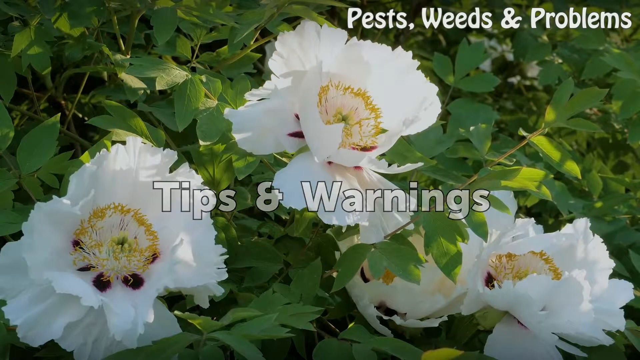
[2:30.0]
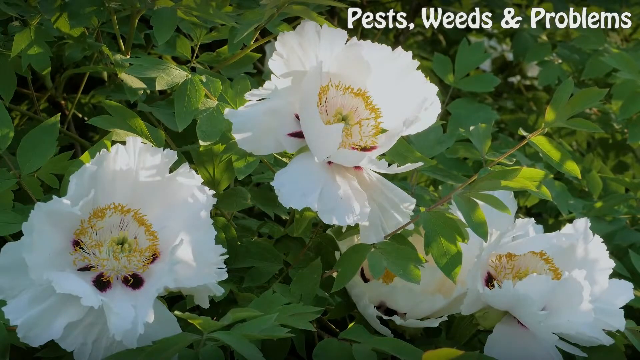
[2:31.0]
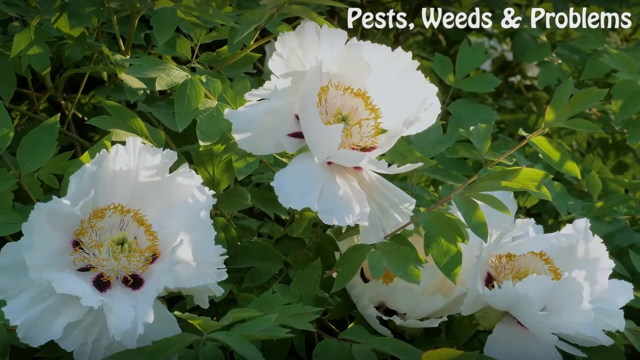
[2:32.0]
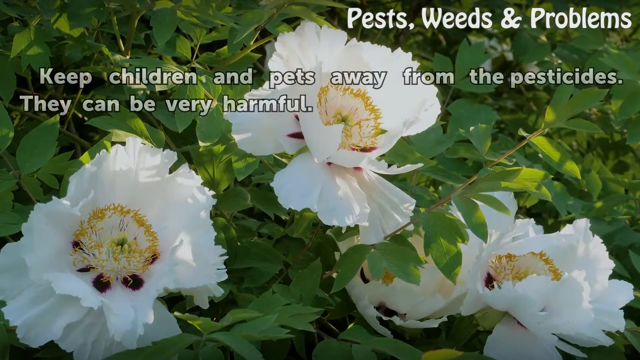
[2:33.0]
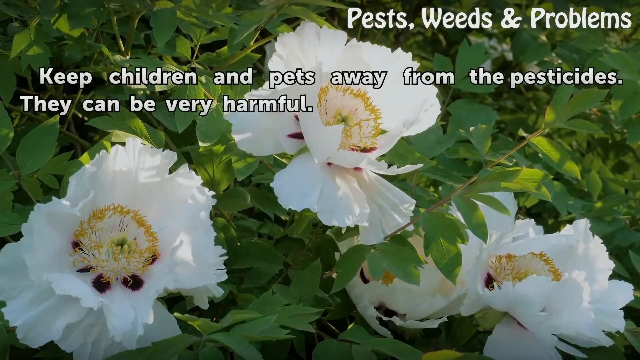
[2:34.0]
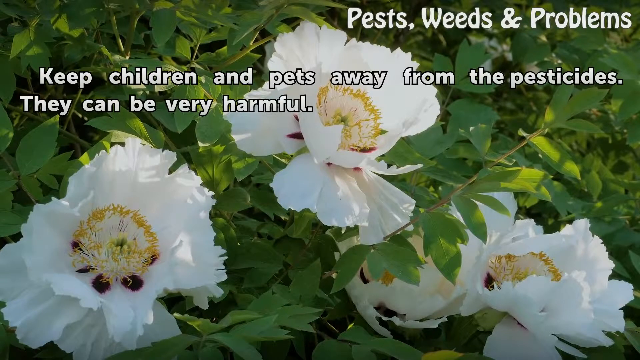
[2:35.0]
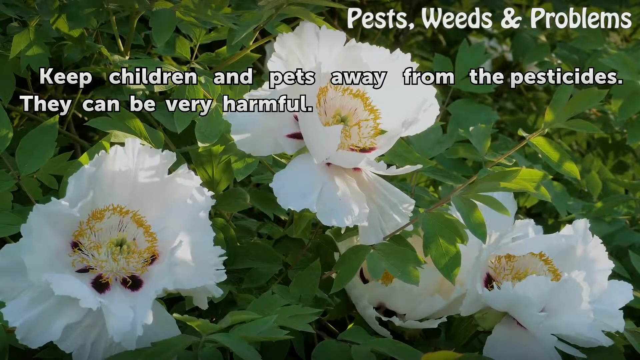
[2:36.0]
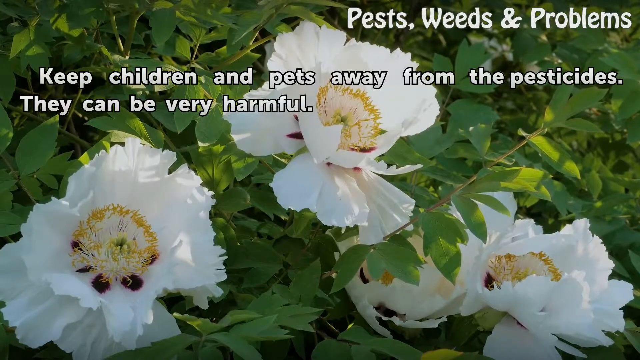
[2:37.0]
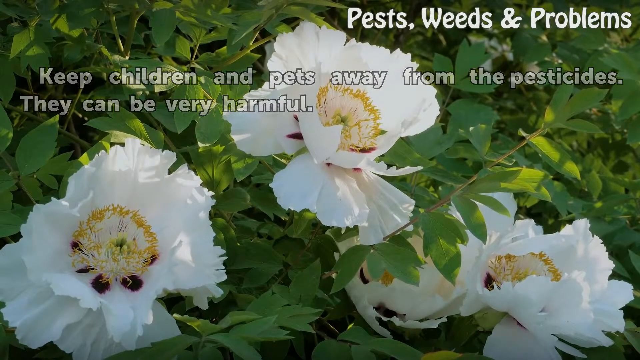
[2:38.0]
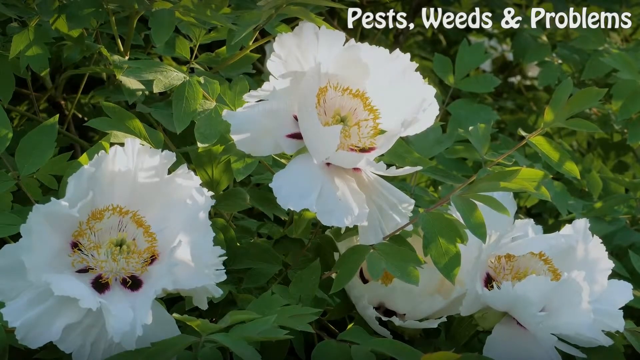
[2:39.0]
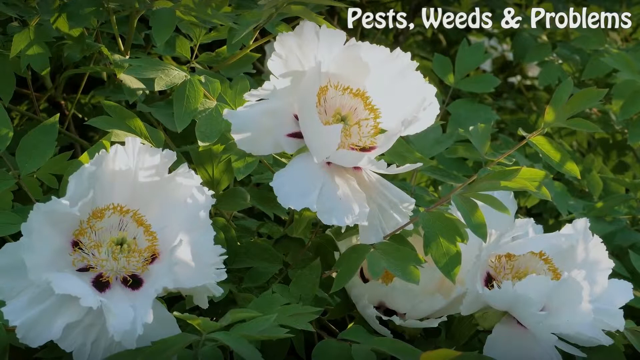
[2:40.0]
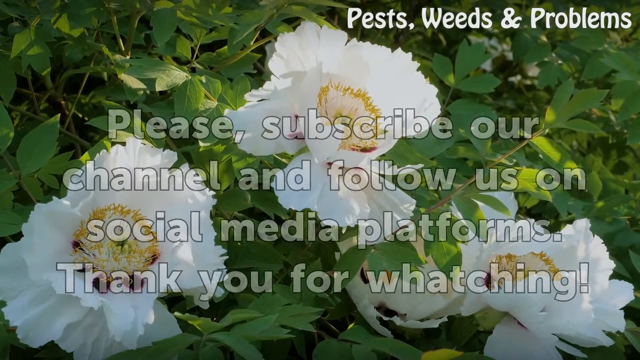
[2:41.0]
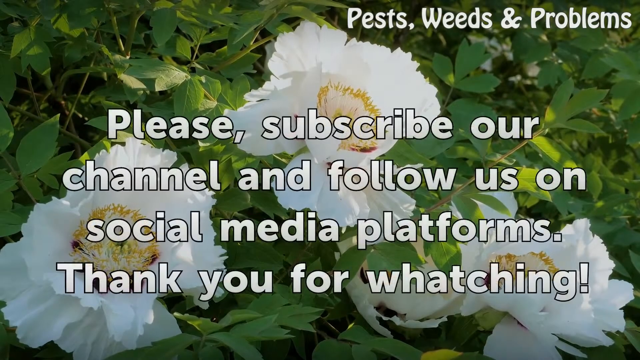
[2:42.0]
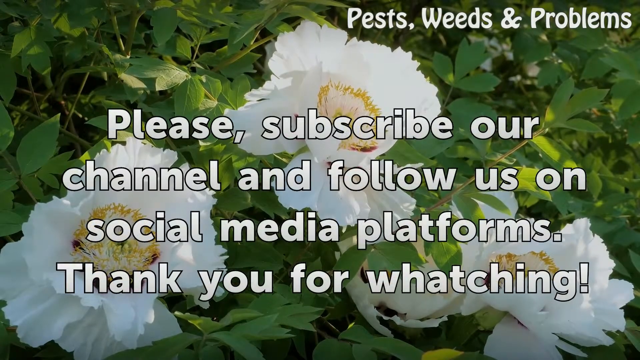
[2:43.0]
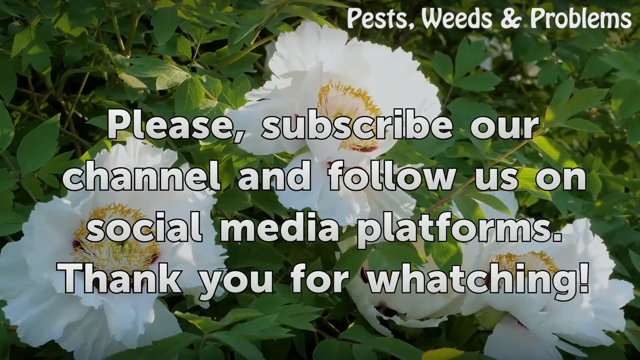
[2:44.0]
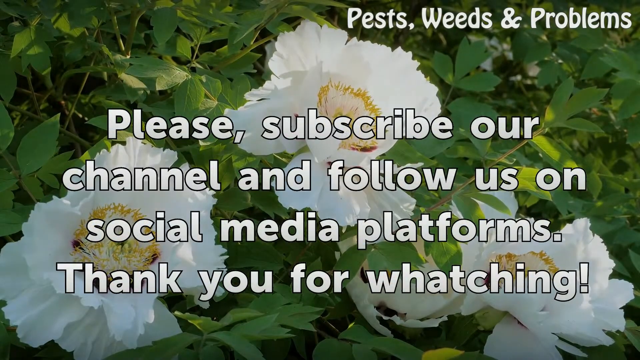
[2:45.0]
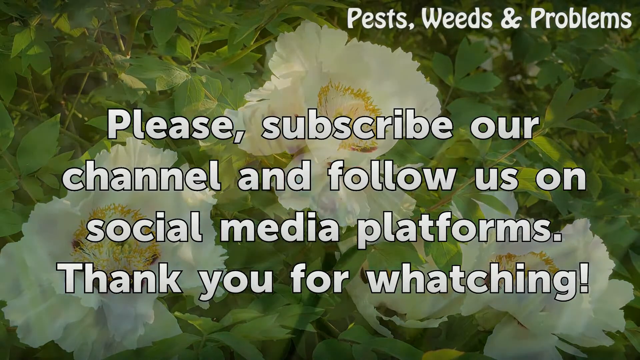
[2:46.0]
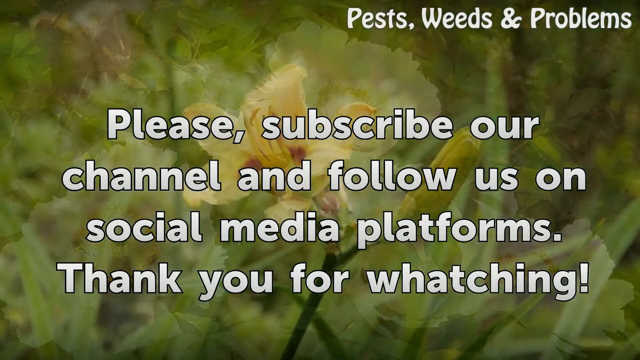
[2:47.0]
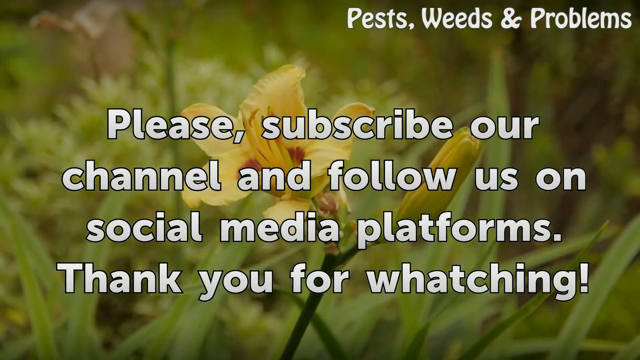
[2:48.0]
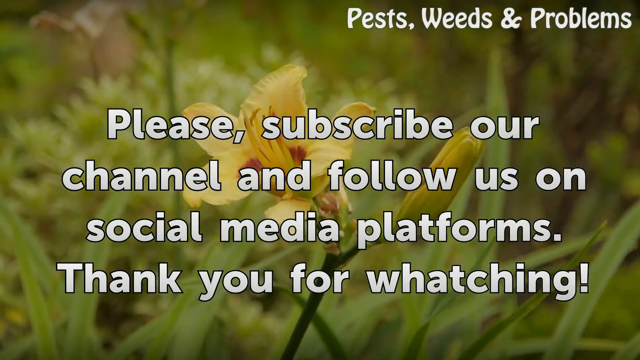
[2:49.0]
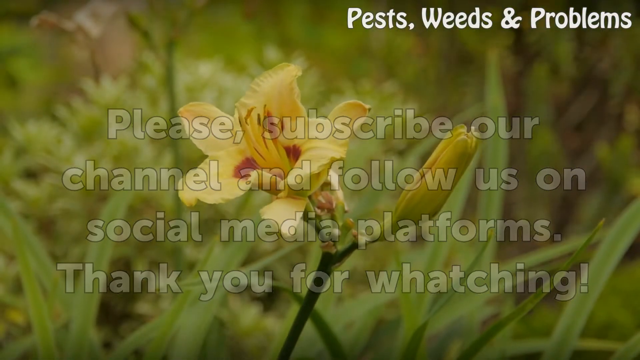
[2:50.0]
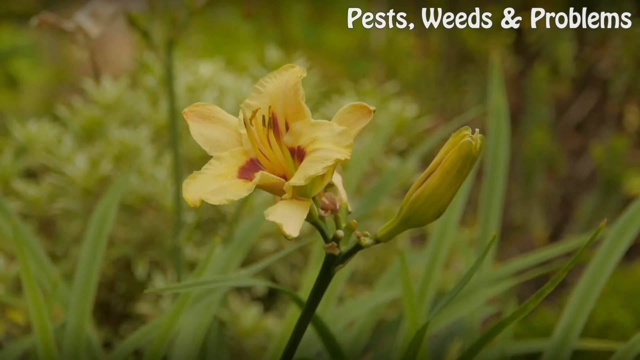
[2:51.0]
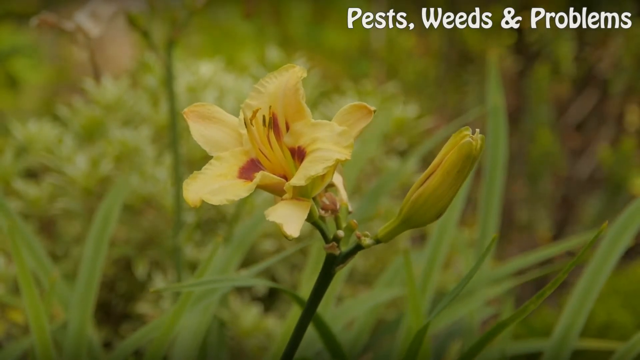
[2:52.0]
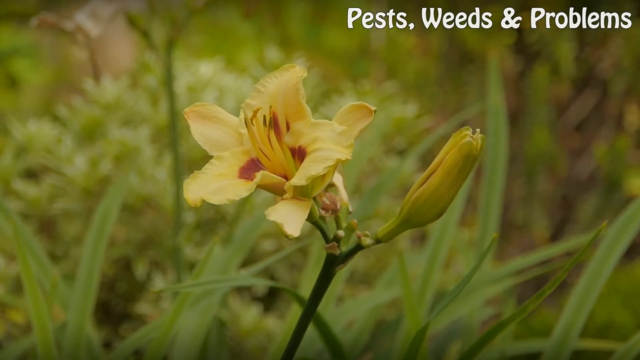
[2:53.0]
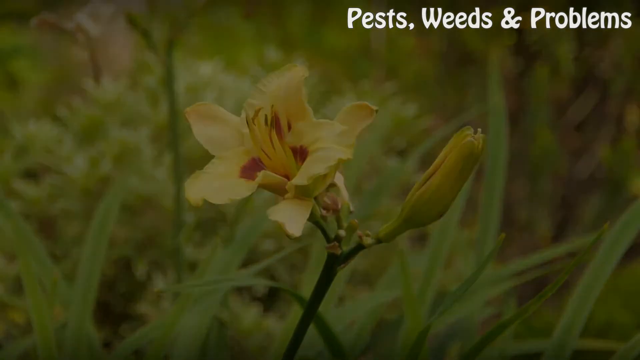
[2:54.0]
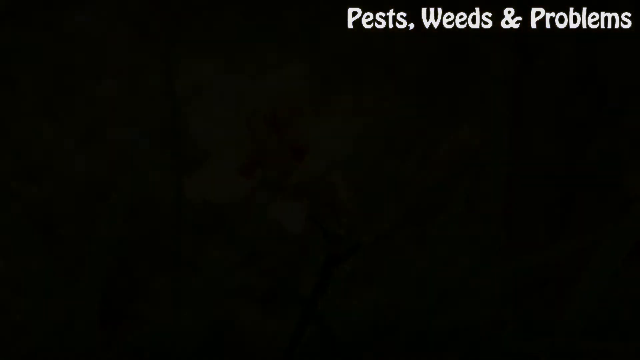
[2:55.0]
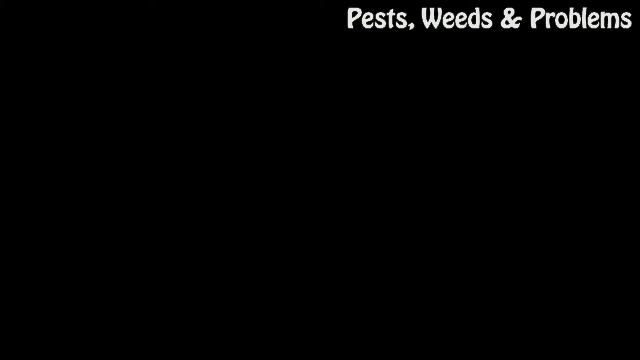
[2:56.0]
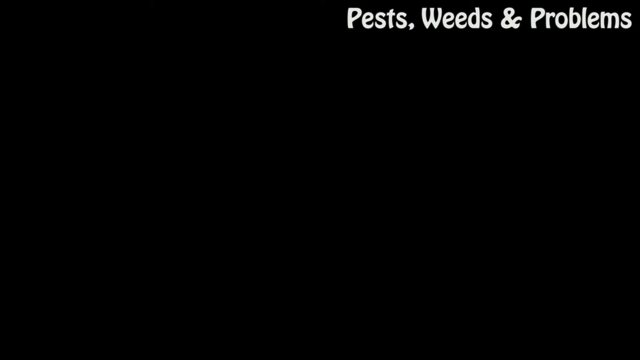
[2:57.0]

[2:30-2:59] The "tips and warnings" caption fades away, and a line of text appears towards the top of the screen: "keep children and pets away from the pesticides, they can be very harmful." The white roses in the background turn out to be video footage rather than a still photograph, as wind ruffles the petals of the middle flower. More text then appears in the middle of the screen: "please subscribe our channel and follow us on social media platforms. Thank you for watching." The word "watching" contains a typo, spelled "whatching", and the word "to" is missing after "subscribe". In the background, the shot of the roses mixes through to a close-up of a gladioli flower waving gently in the breeze. Then the picture fades to black.